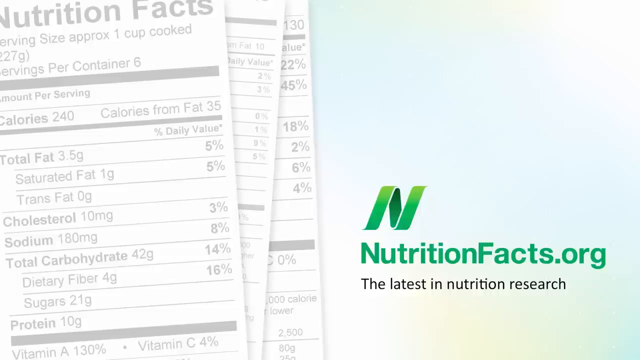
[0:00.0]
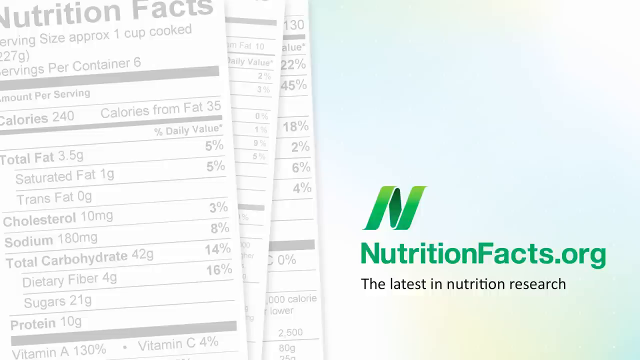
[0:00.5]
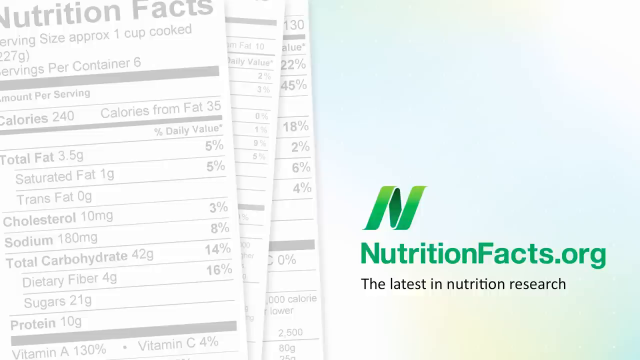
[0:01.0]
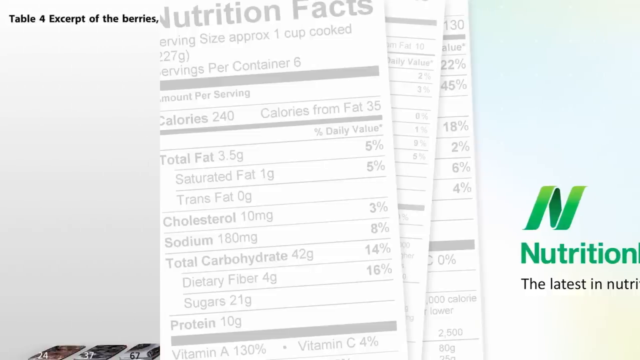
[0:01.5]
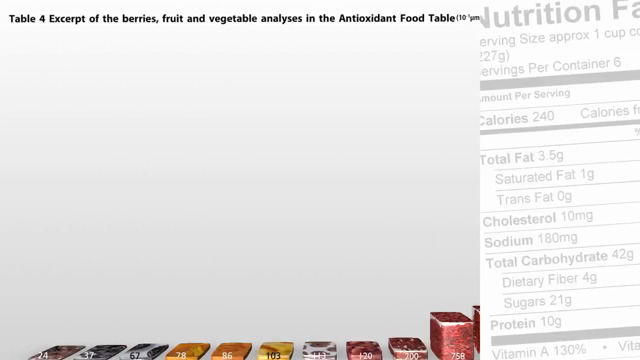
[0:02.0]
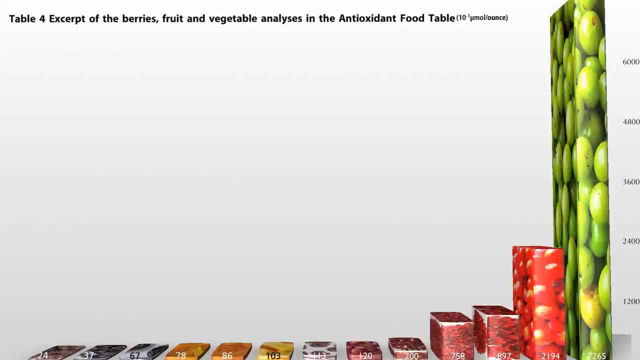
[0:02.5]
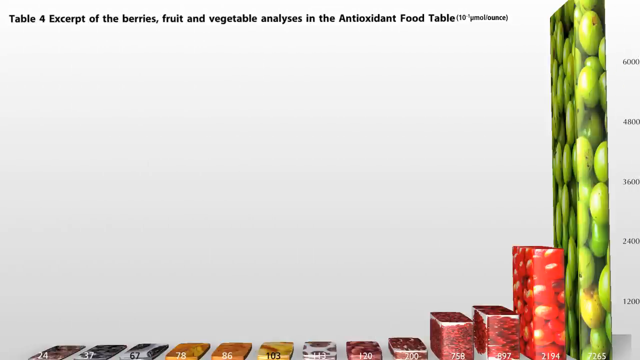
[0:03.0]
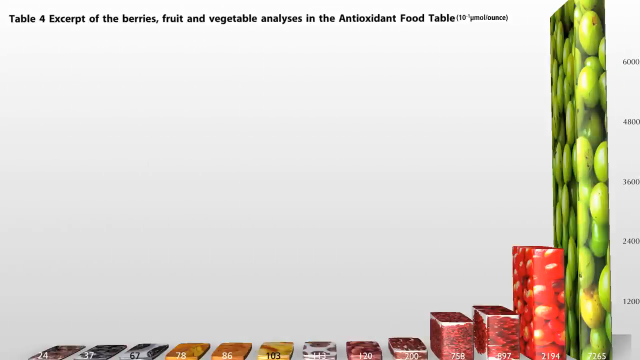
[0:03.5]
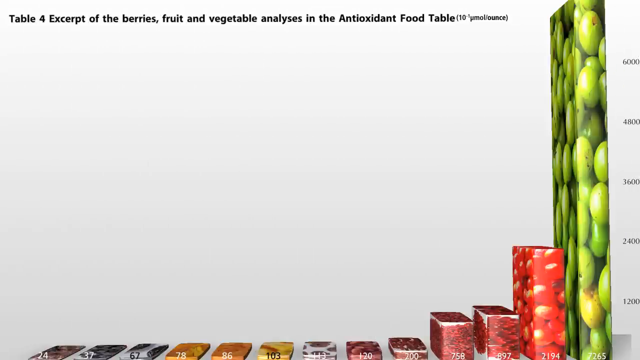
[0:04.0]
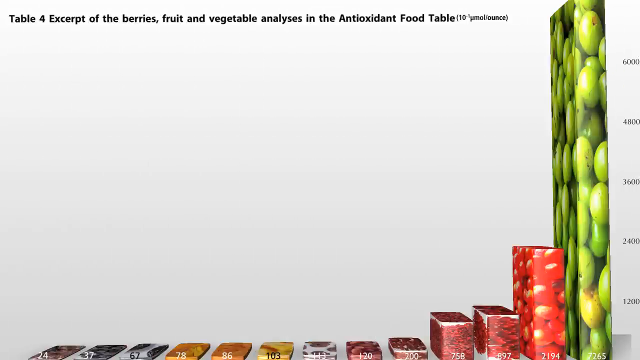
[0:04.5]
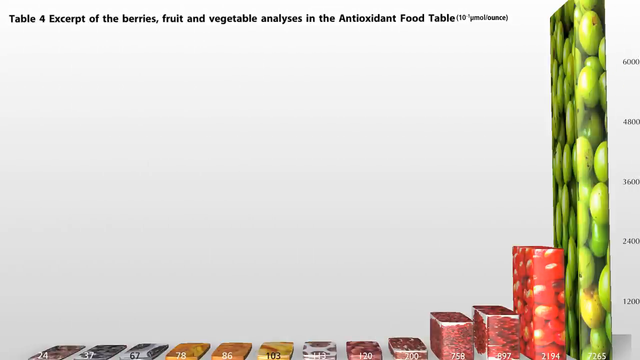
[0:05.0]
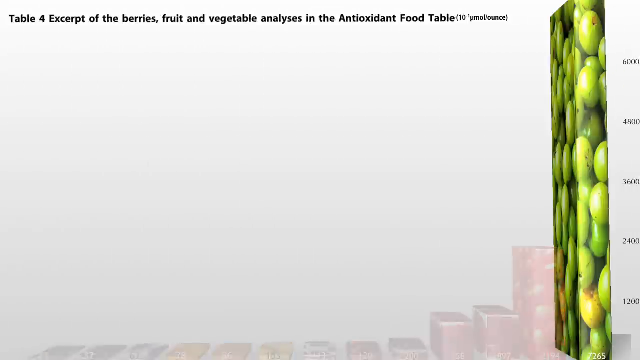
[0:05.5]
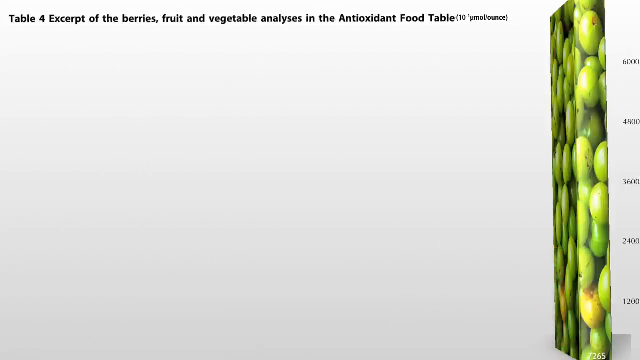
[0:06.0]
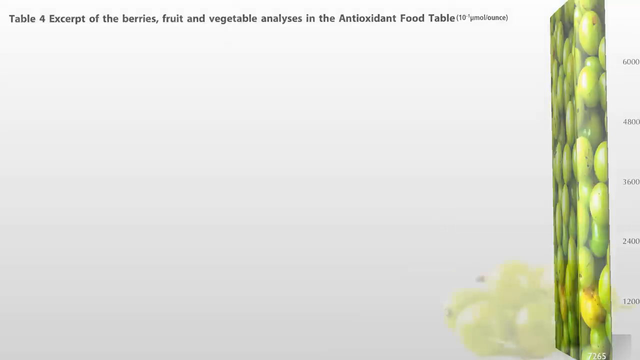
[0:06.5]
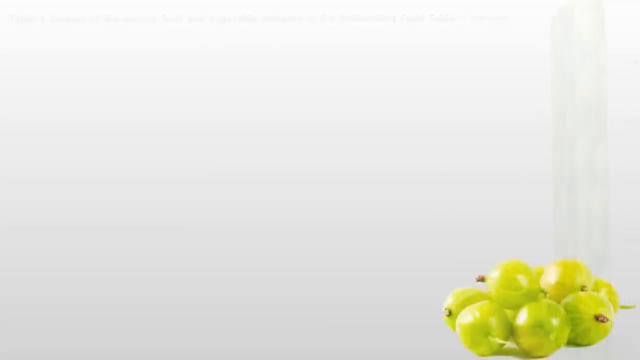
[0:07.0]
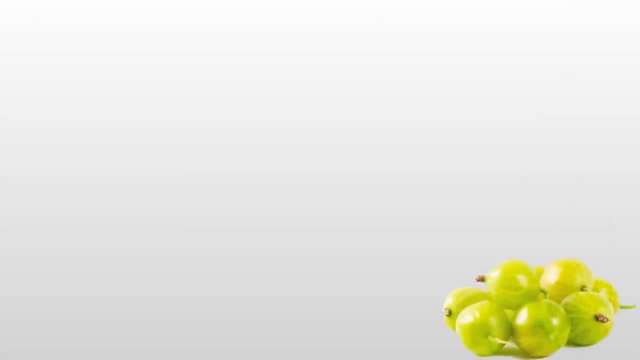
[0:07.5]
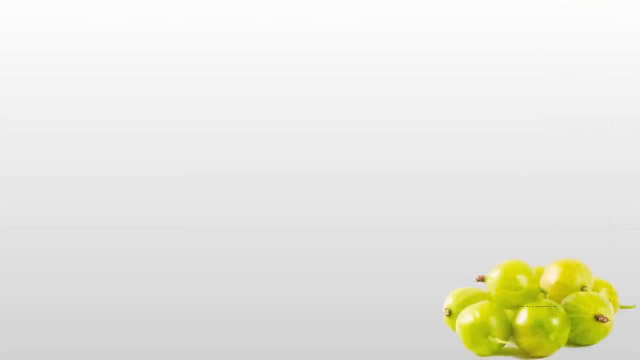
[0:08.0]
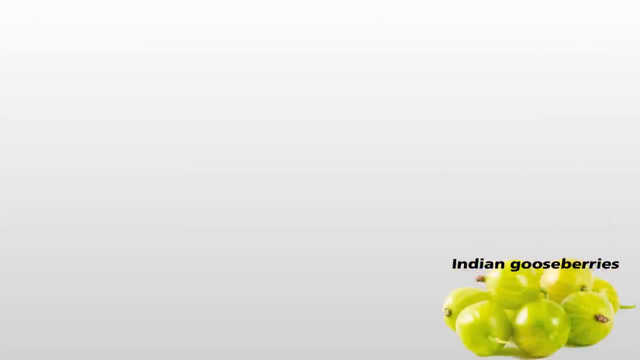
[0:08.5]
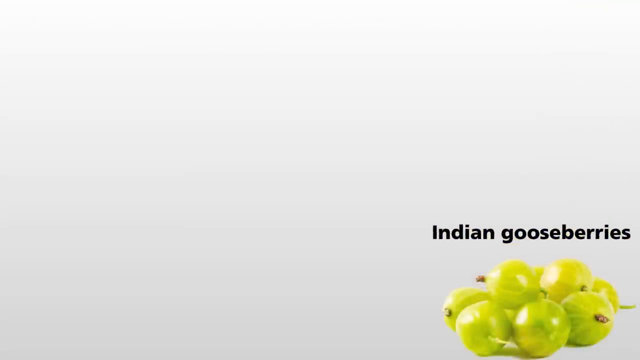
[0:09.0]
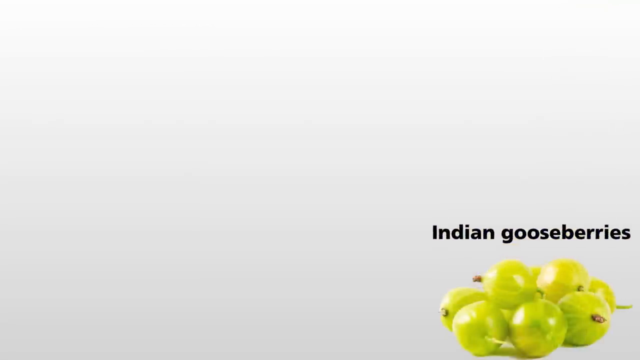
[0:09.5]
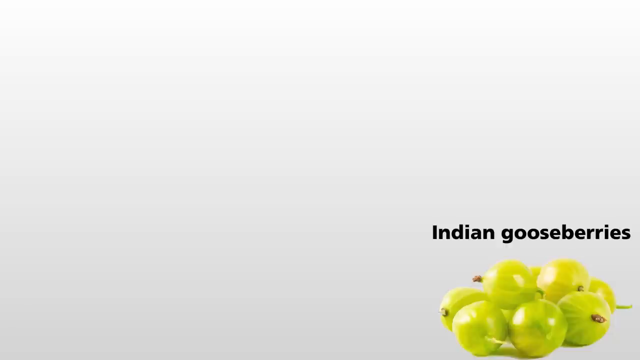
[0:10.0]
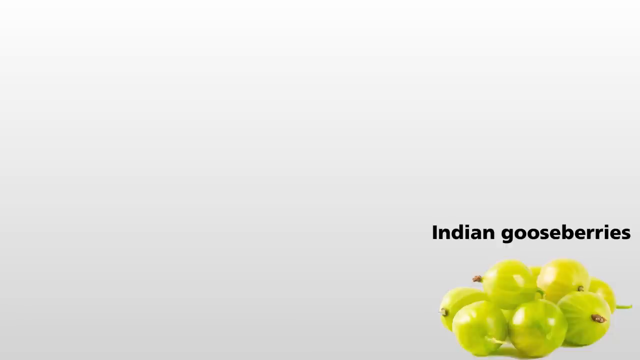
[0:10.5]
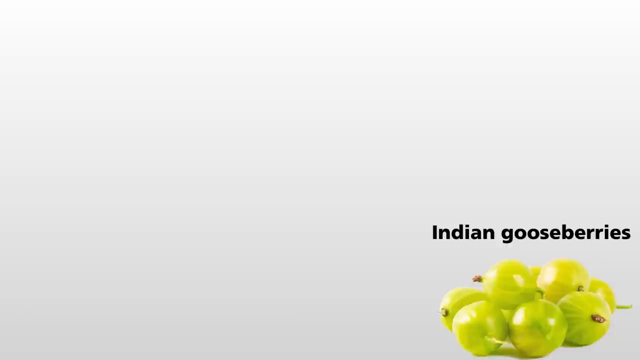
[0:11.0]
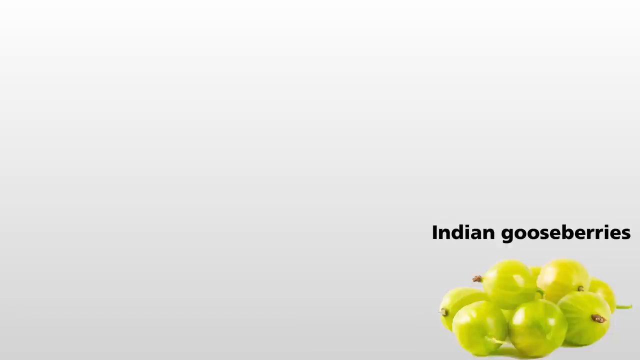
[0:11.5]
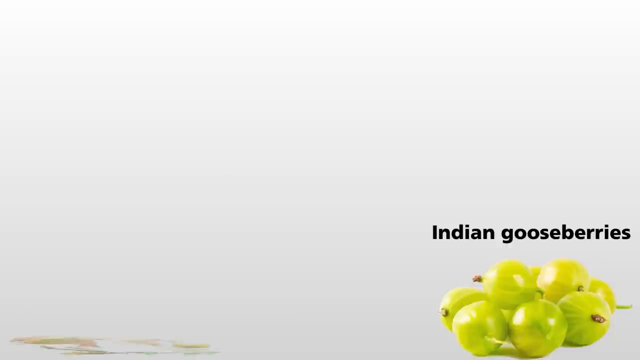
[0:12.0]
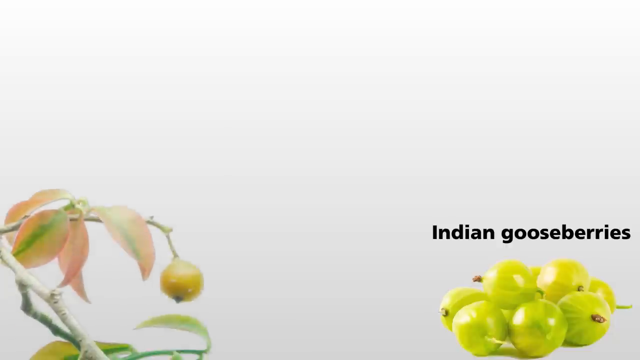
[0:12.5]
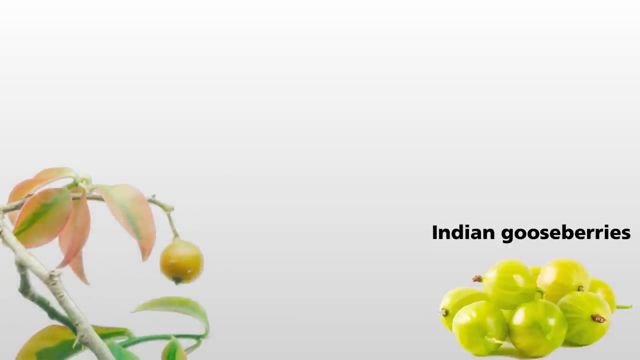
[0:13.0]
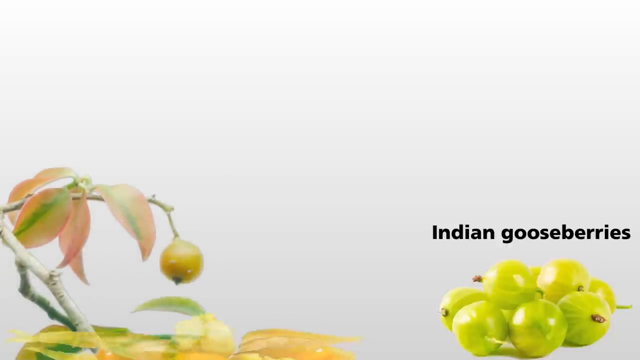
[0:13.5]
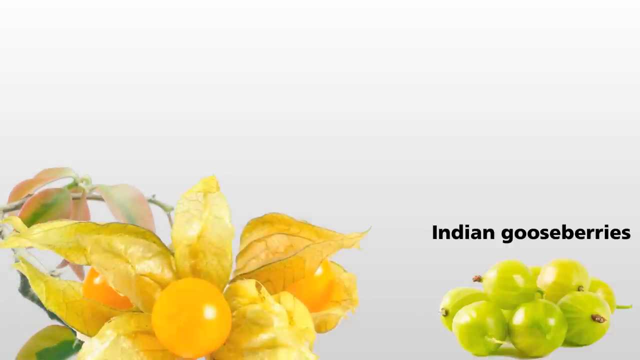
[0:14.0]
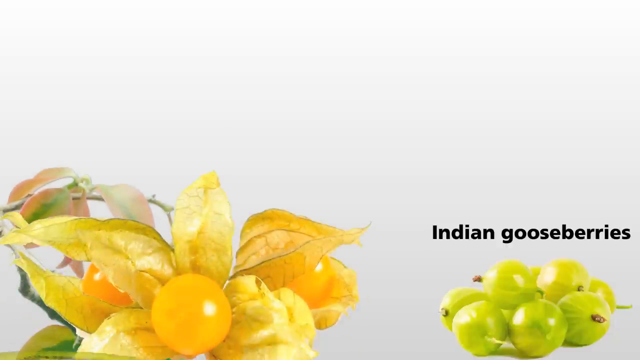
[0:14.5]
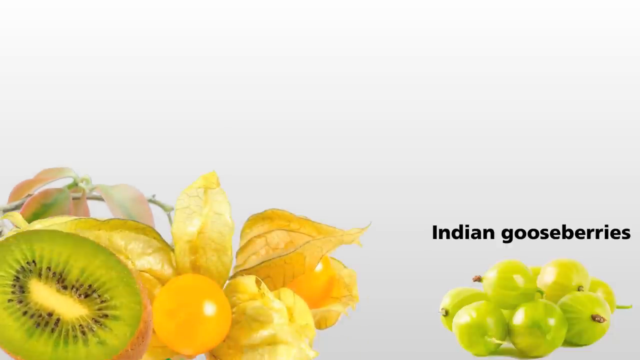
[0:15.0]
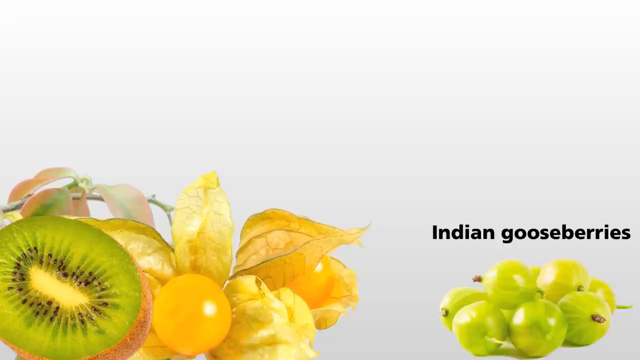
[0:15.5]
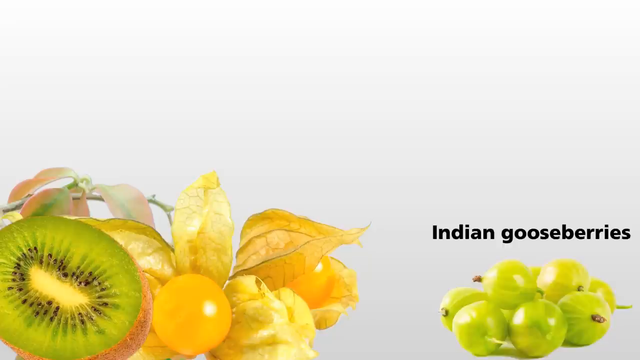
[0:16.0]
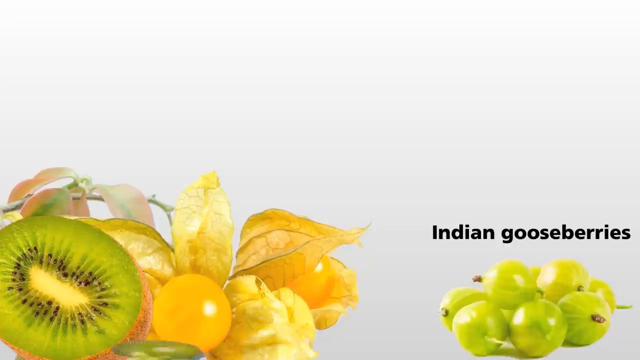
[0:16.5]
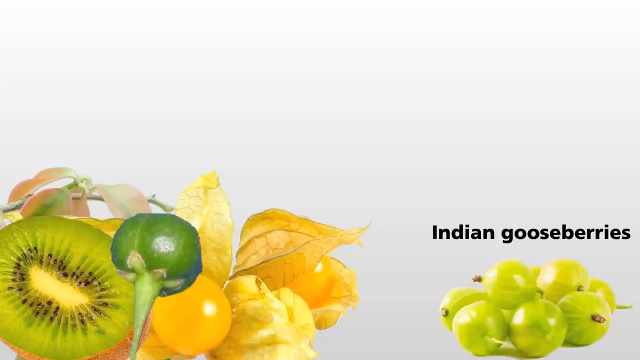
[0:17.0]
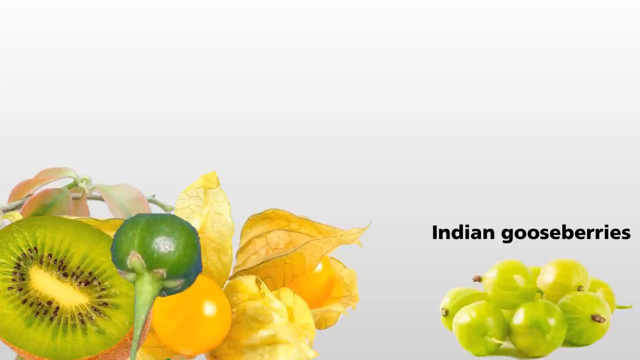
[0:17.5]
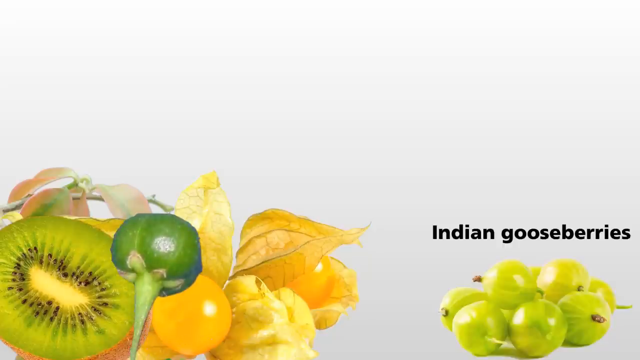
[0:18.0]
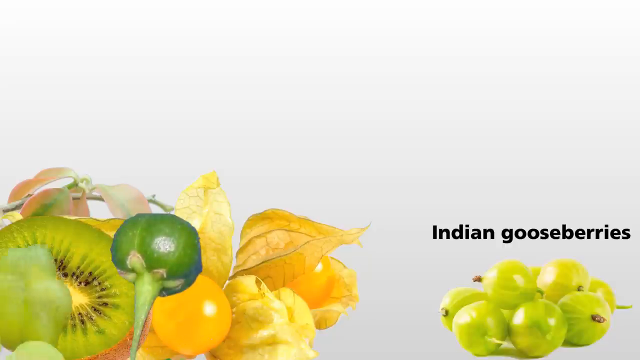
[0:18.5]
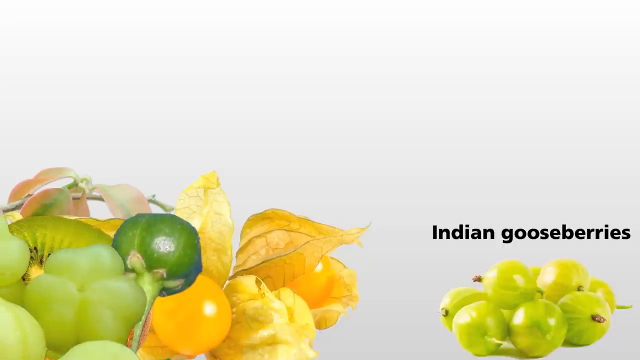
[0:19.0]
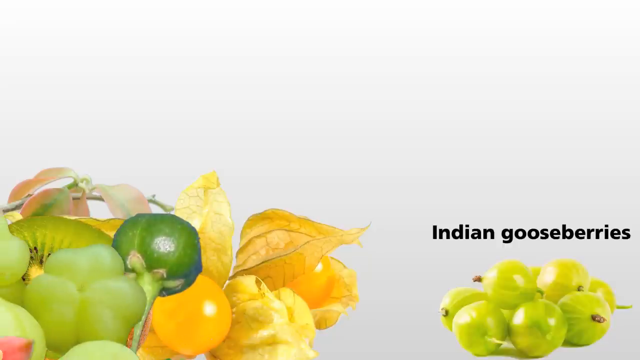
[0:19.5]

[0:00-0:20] A light blue background shows, on the right, a logo that looks like a green letter N, kind of written with a ribbon. Beneath it, green text reads "nutritionfacts.org", and beneath that, smaller black text reads "the latest in nutrition and research". On the left, a few stacks of nutrition labels kind of slide to the right side of the screen. The scene changes to a screen with black lettering at the top reading "Table 4, Excerpt of the Berries, Fruit, and Vegetable Analysis in the Antioxidant Food Table". Below it is a chart whose bars each carry images of different fruits and vegetables. On the right is a very tall bar above 6,000 units that appears to have pictures of some small, circular green fruit. Next to it are smaller rows of different bars with red fruits and yellow fruits; most are pretty small, the majority are almost black, and they carry different numbers. All the bars disappear except the very tall one on the right, which reads "7,265" at the bottom. On the right side, equally spaced tick marks run up from the bottom of the graph: 1,200, 2,400, 3,600, 4,800 and 6,000. The bar then disappears, and at the bottom appears what looks like six or seven of the small, circular green fruits piled up, labeled in black text "Indian gooseberries". On the left is a plant that looks like what the Indian gooseberries grow from: a skinny branch with some pinkish-orange leaves and yellow unripe gooseberries on it. Then what looks like a plant with skinny yellow leaves and a circular yellow bulb in the middle resembling an egg yolk pops up, followed by a picture of a kiwi cut in half, a circular deep green fruit with a skinny green stem, a lighter green, round, kind of flower-like fruit, and a fruit with pink petals. All of these fruit images kind of pile on top of each other.